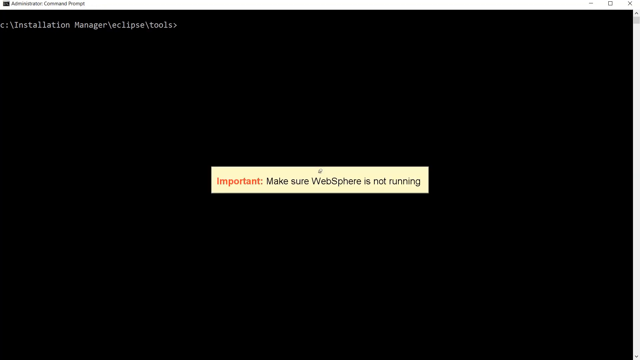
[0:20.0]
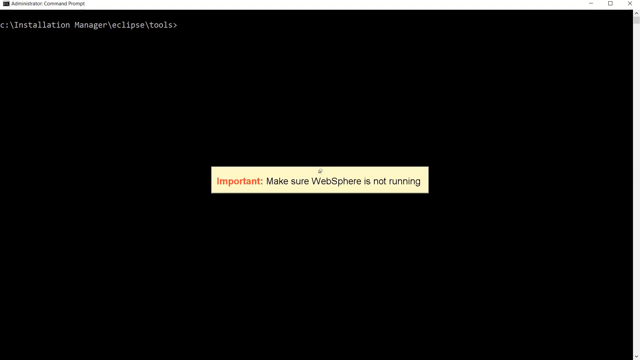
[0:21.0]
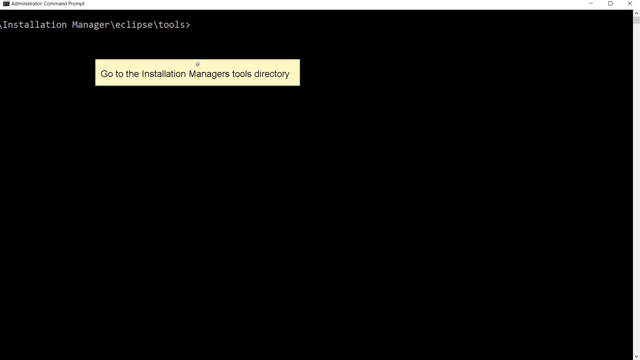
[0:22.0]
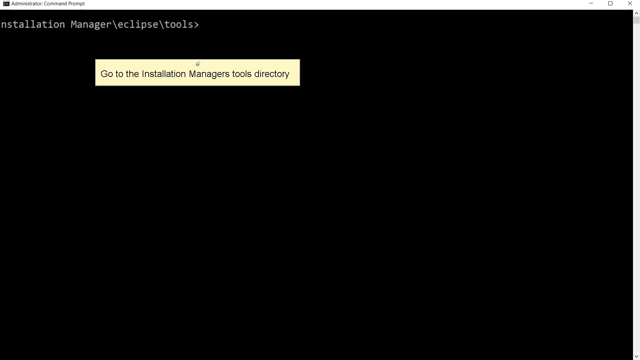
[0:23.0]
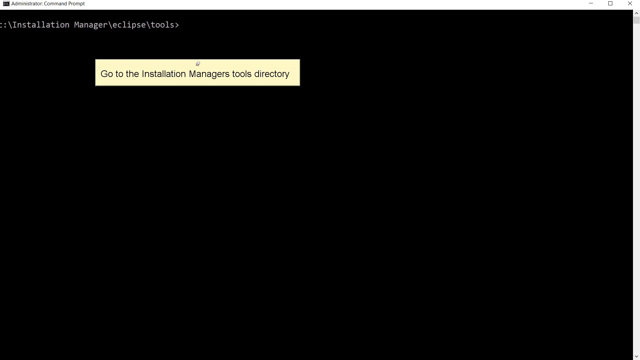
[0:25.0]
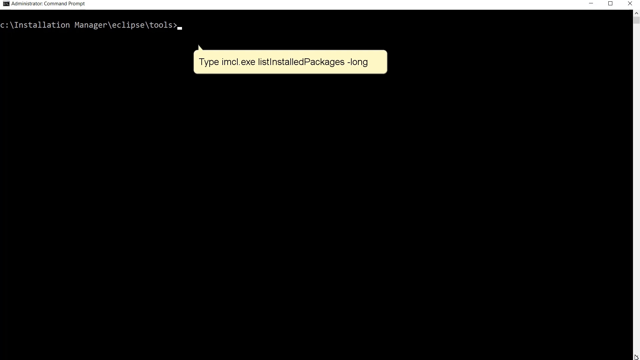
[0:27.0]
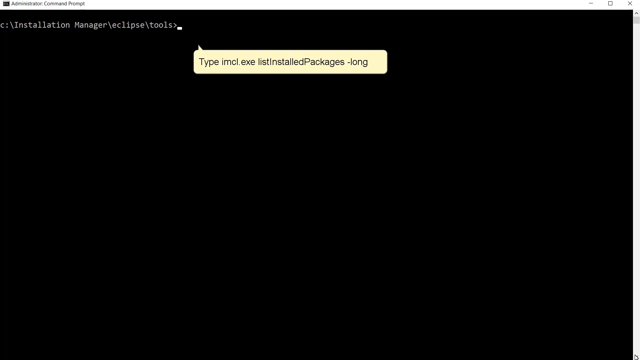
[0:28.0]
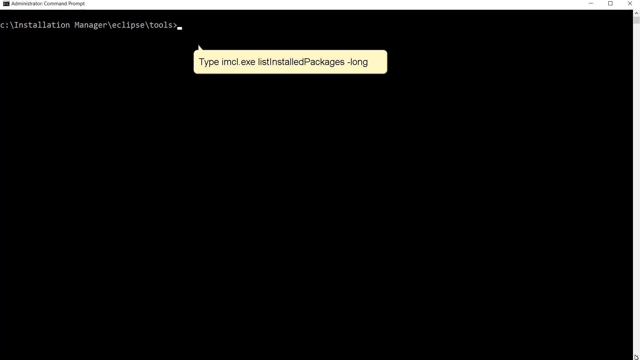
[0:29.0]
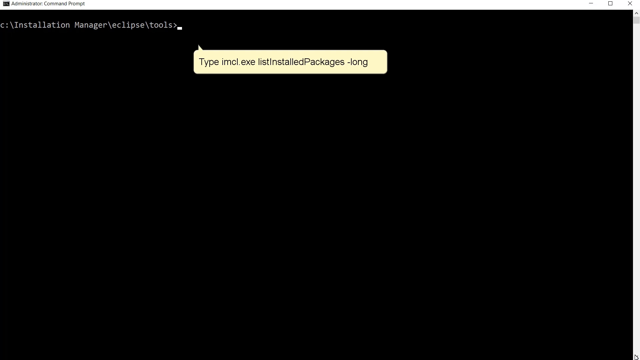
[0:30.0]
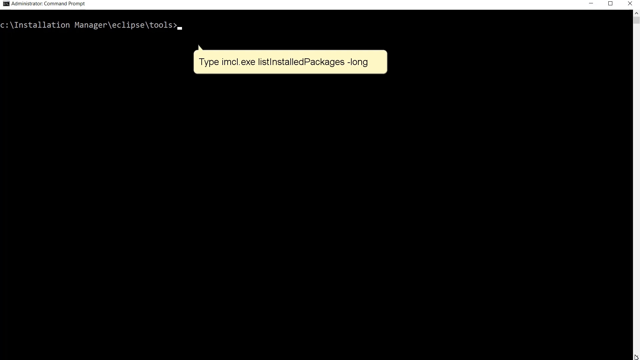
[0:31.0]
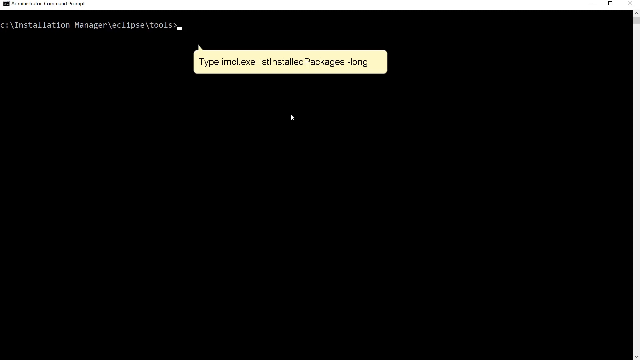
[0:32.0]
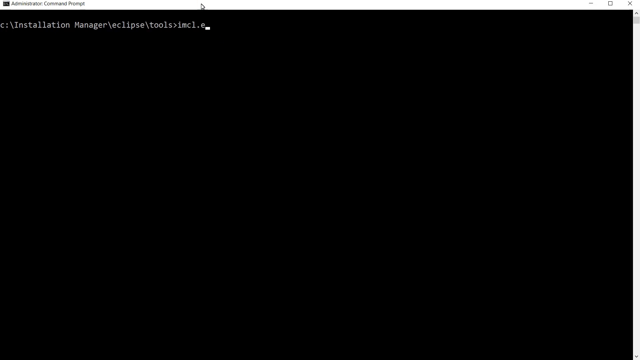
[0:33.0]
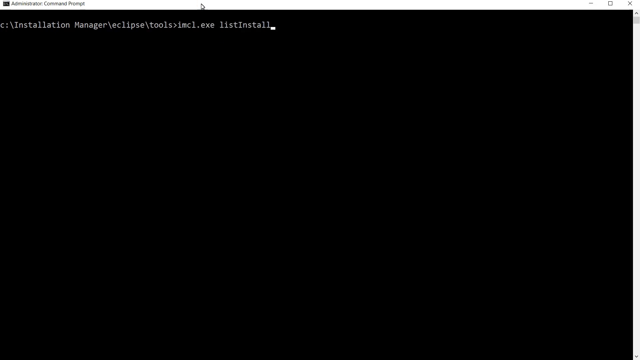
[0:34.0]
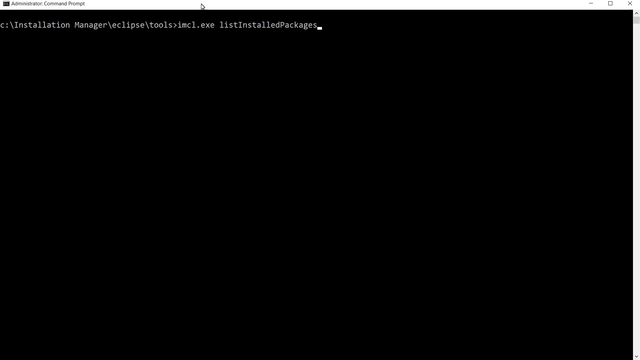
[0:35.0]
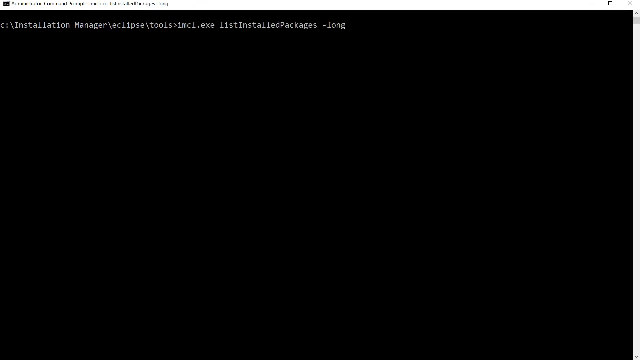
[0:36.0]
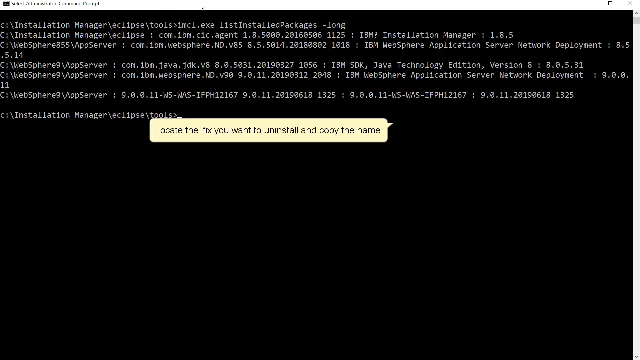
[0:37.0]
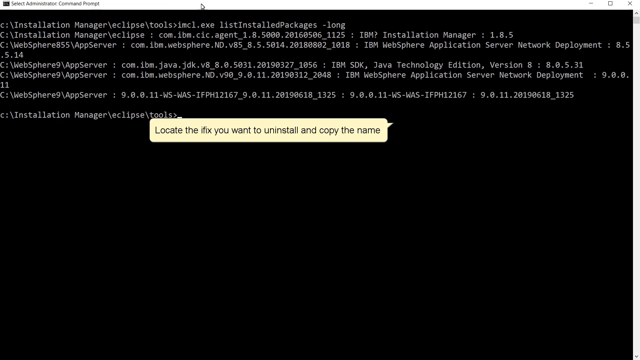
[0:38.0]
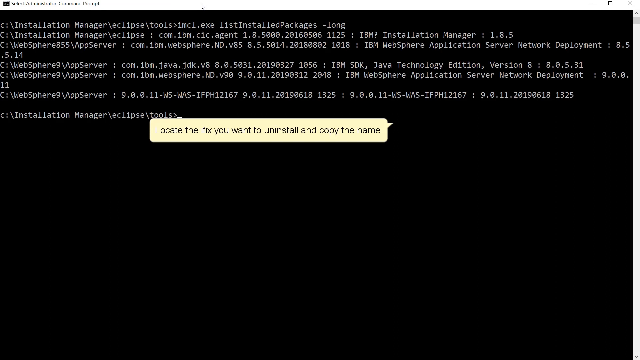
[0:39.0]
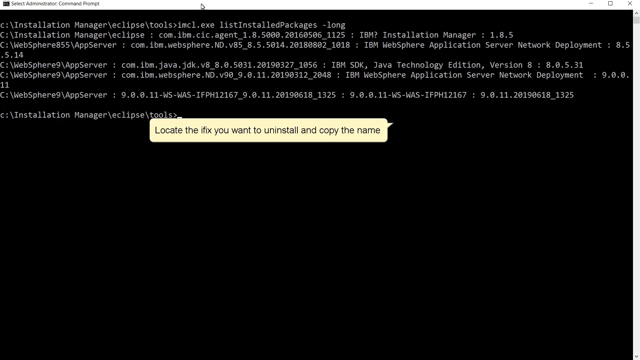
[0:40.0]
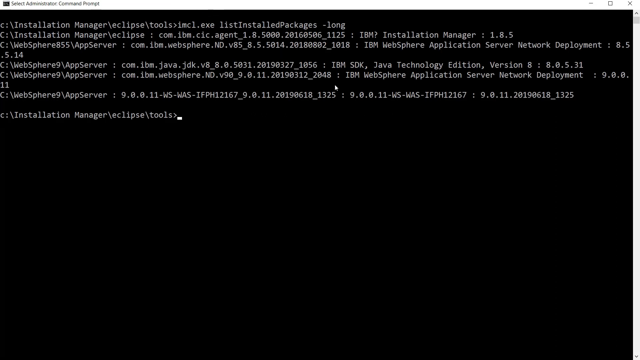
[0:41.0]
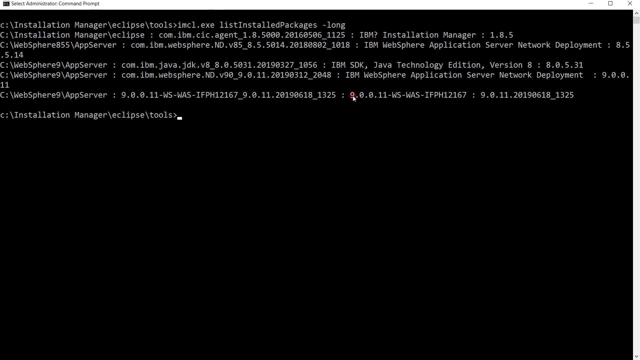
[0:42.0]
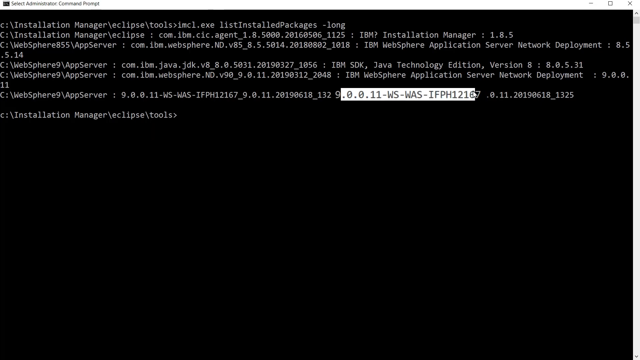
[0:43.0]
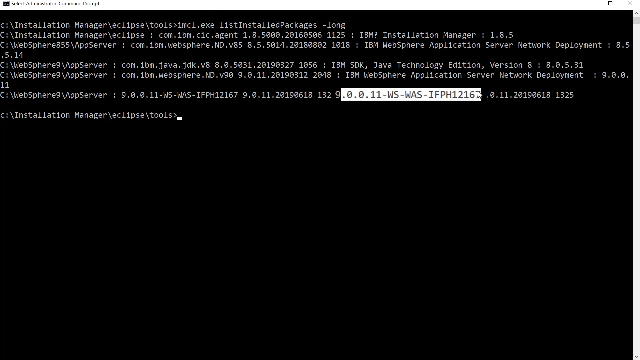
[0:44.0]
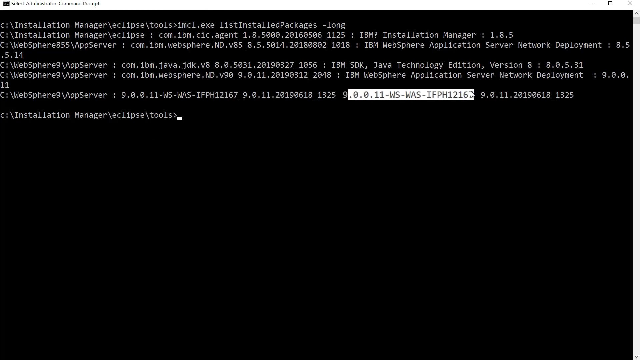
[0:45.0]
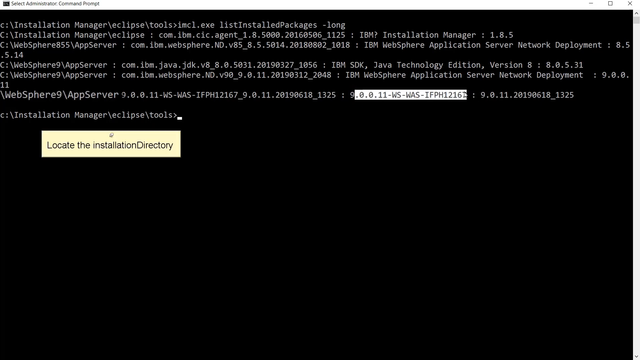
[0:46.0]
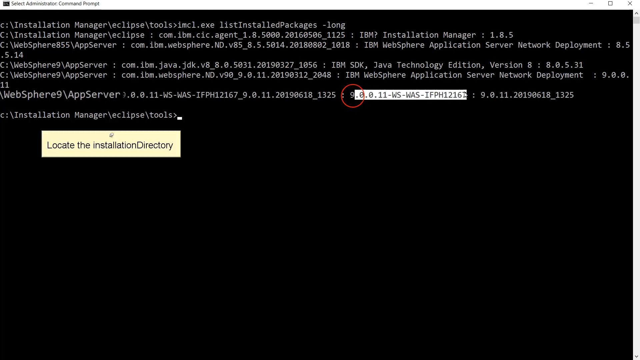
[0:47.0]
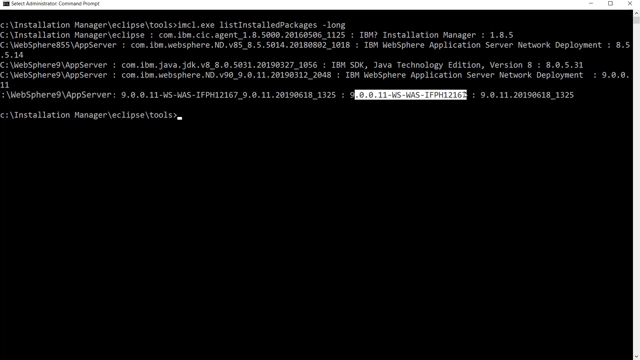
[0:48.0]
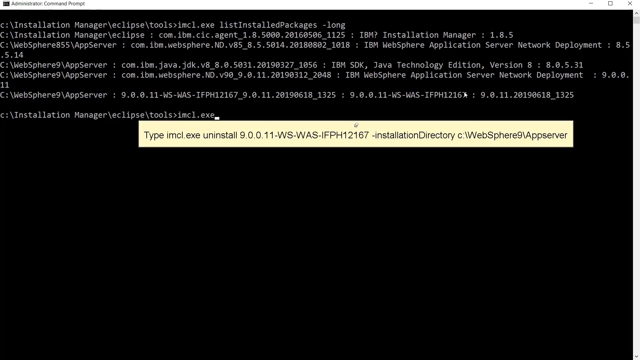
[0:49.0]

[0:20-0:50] The solid black background continues and appears to be a black computer screen. At the very top is a gray bar that sort of resembles an address bar on a computer. White text, or some kind of code, is being typed out across the screen. A yellow box with black lettering pops up and is highlighted; it says "go to the installation manager's tools directory", and the same box also says "type installed packages". On the black screen the cursor types out individual words, possibly code or a programming system for the computer.